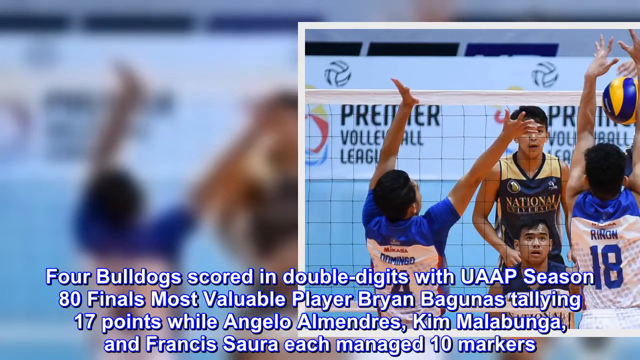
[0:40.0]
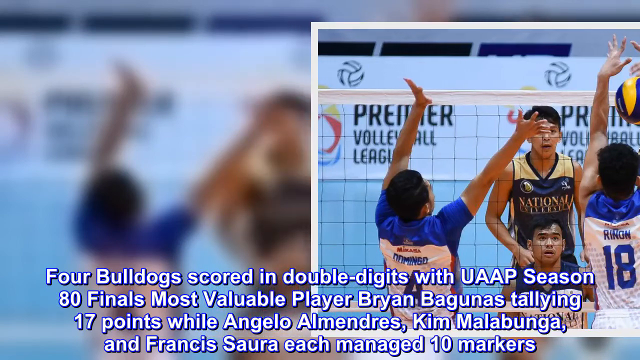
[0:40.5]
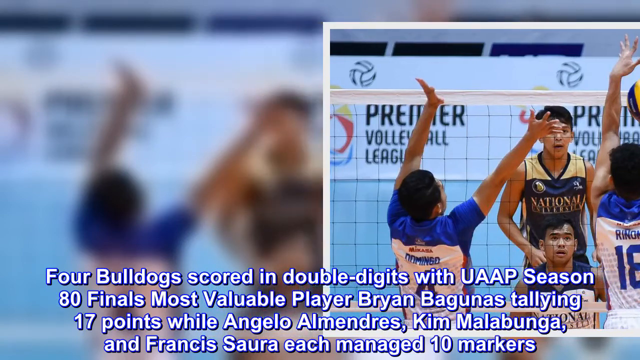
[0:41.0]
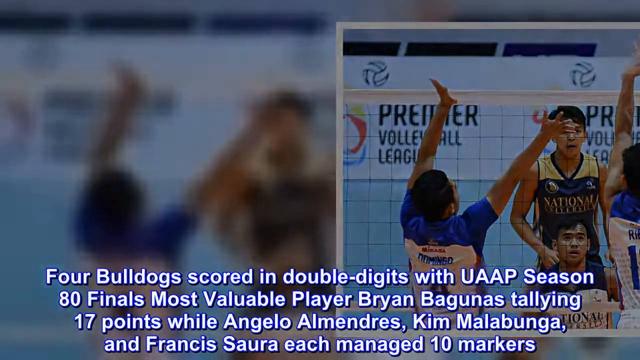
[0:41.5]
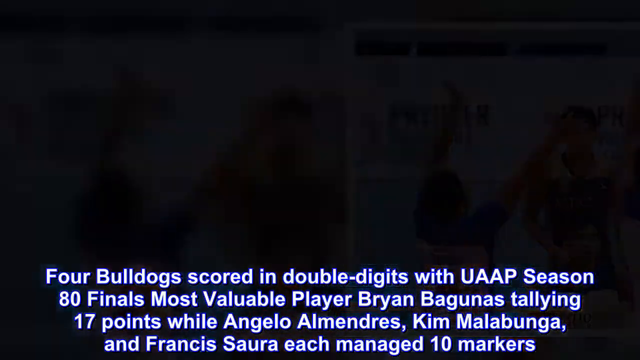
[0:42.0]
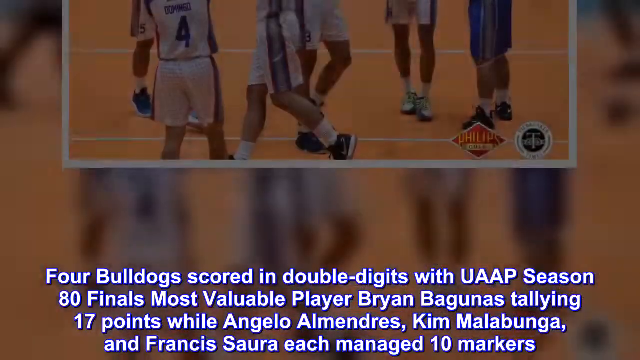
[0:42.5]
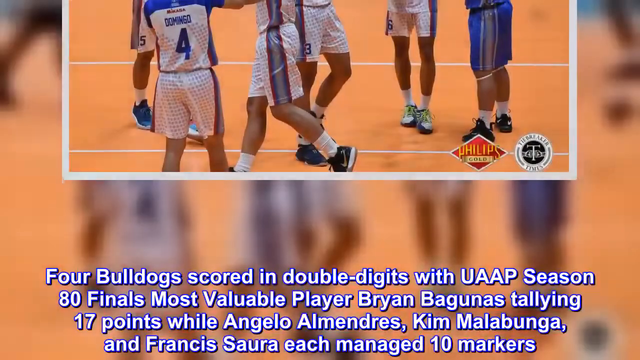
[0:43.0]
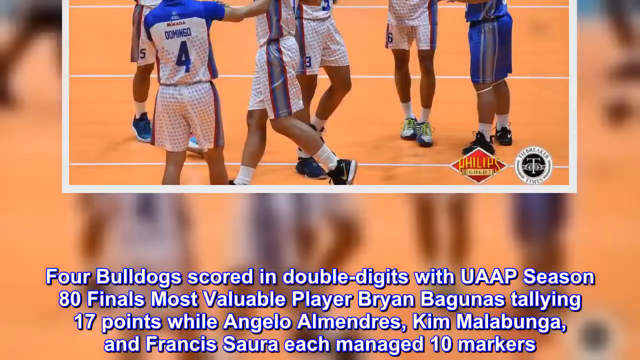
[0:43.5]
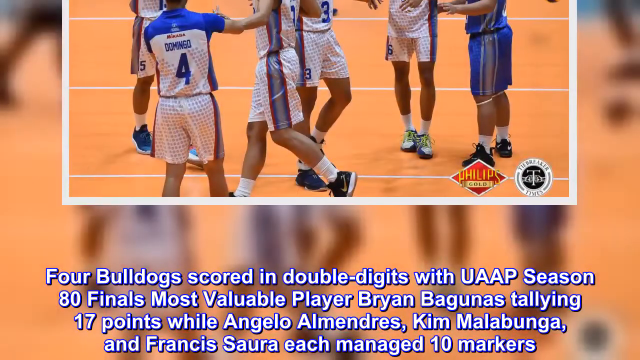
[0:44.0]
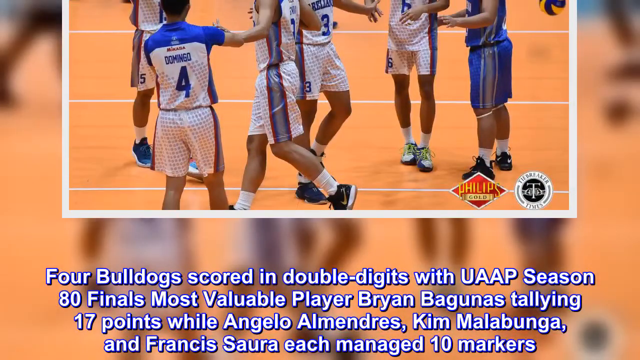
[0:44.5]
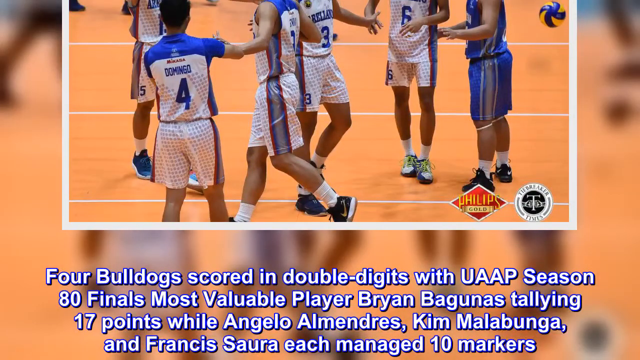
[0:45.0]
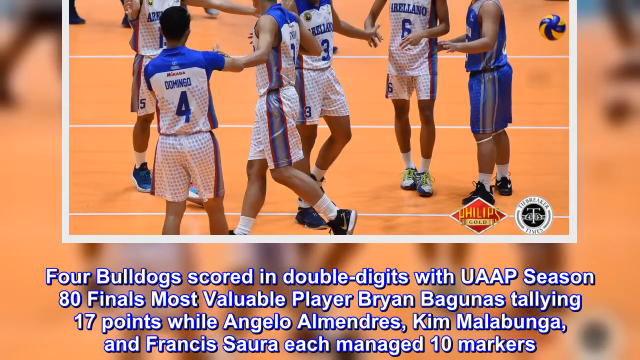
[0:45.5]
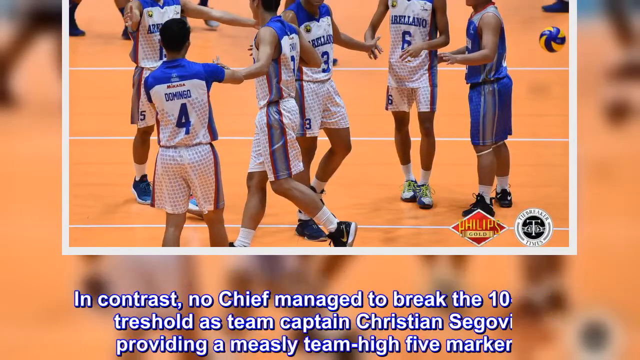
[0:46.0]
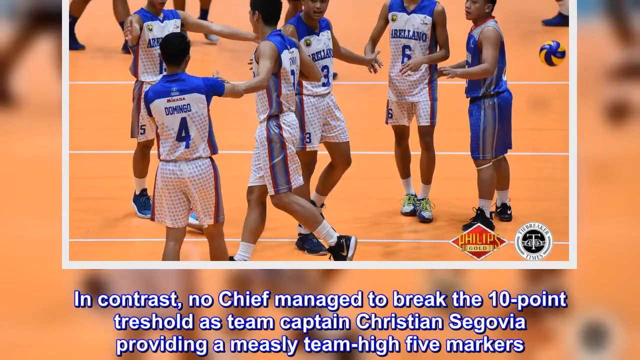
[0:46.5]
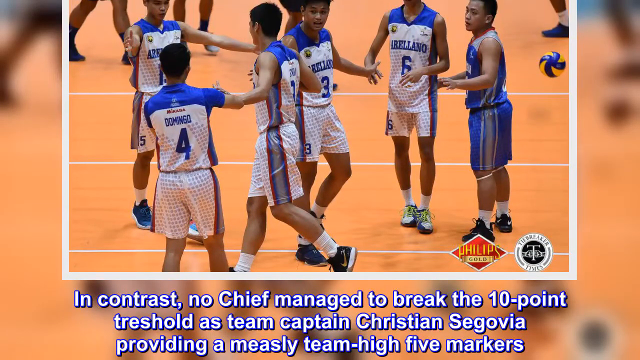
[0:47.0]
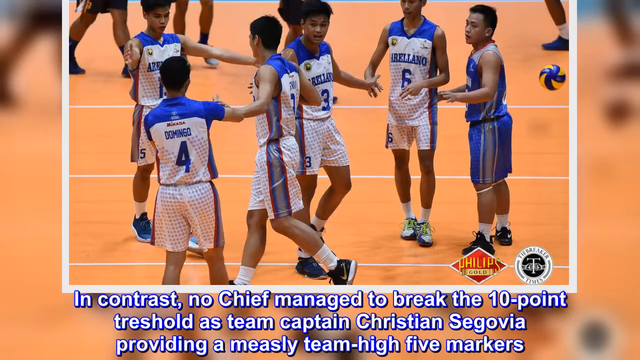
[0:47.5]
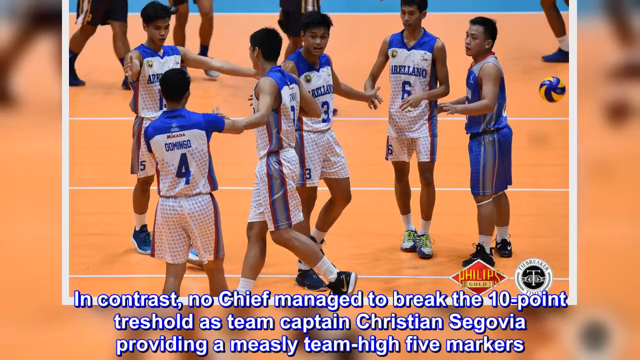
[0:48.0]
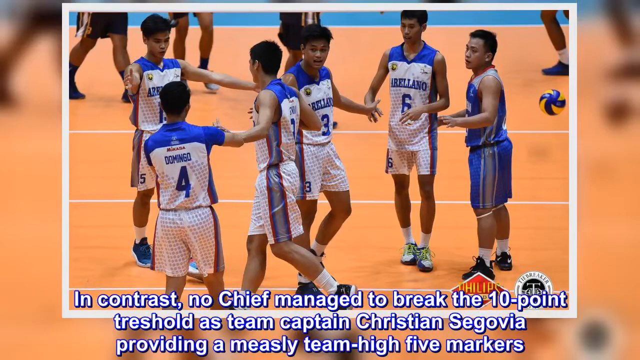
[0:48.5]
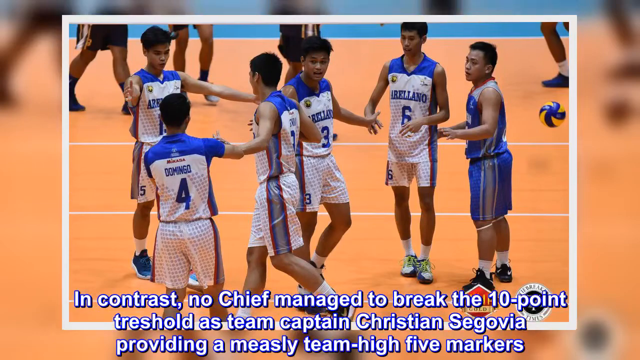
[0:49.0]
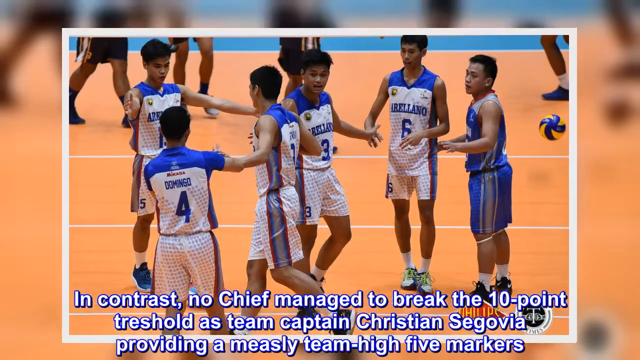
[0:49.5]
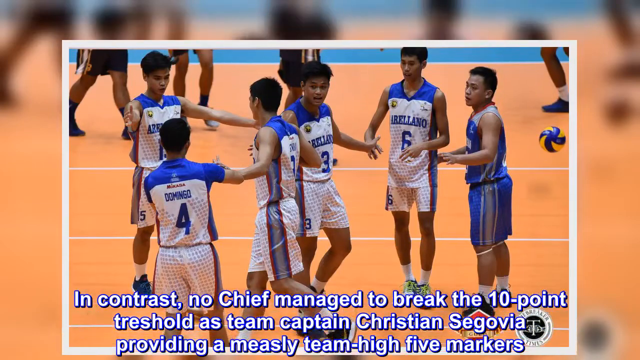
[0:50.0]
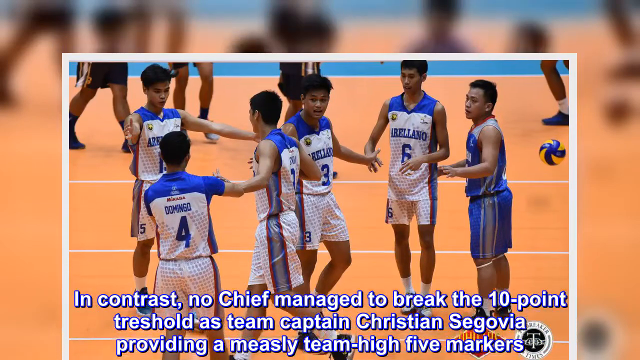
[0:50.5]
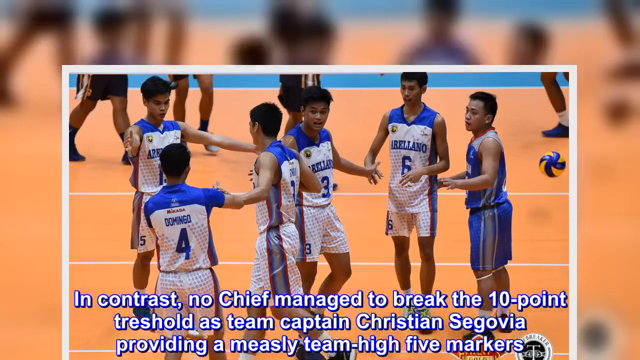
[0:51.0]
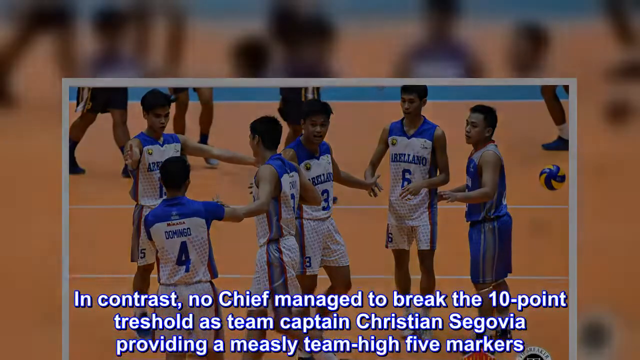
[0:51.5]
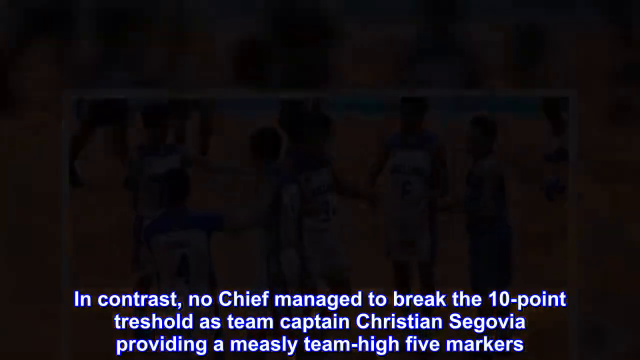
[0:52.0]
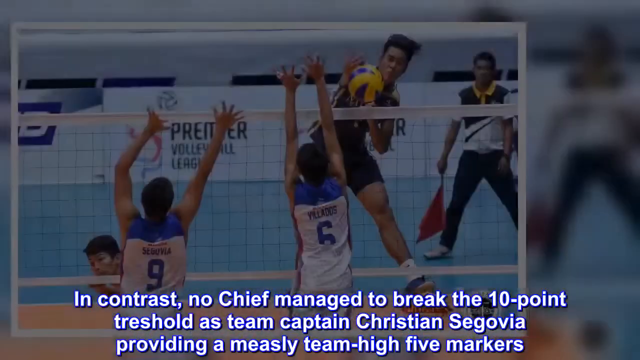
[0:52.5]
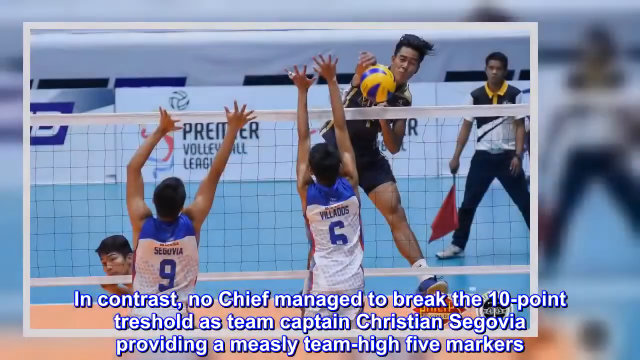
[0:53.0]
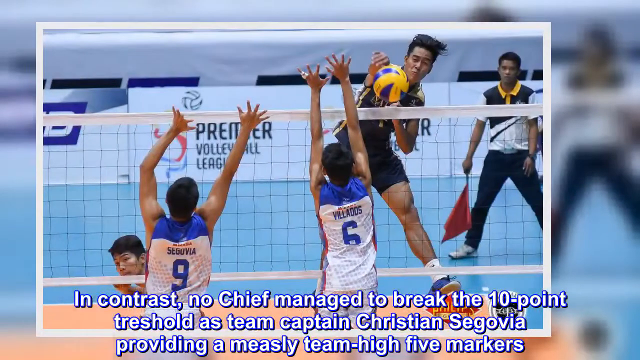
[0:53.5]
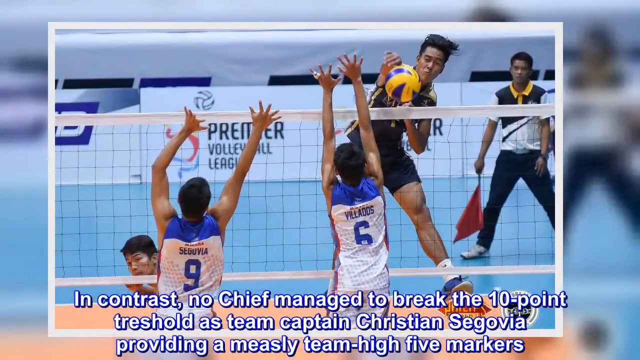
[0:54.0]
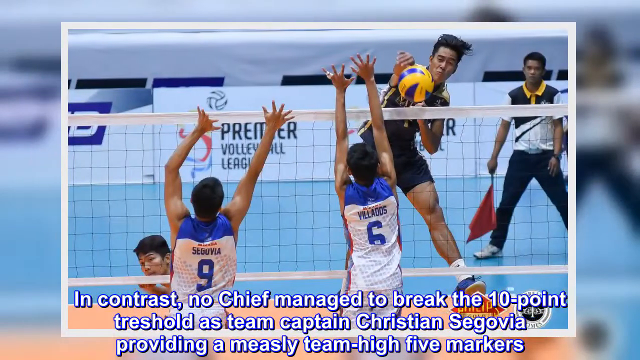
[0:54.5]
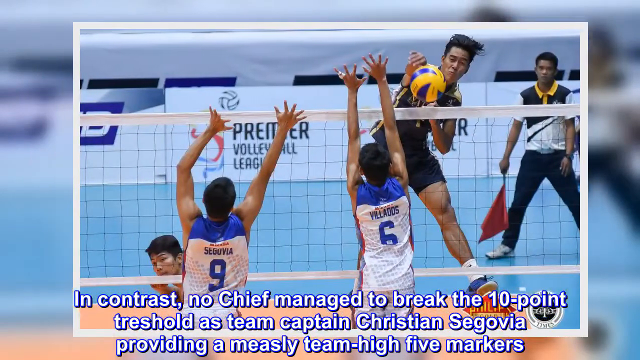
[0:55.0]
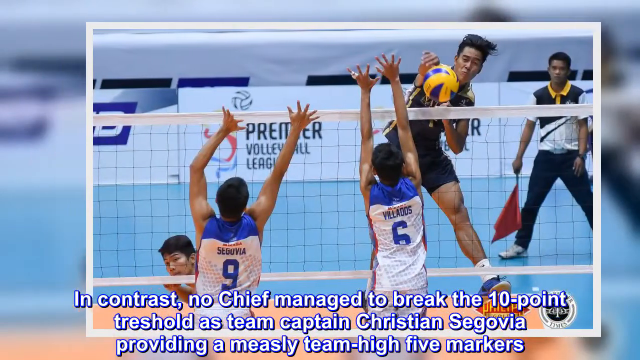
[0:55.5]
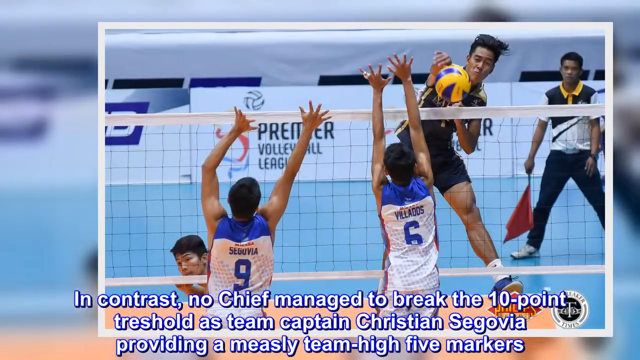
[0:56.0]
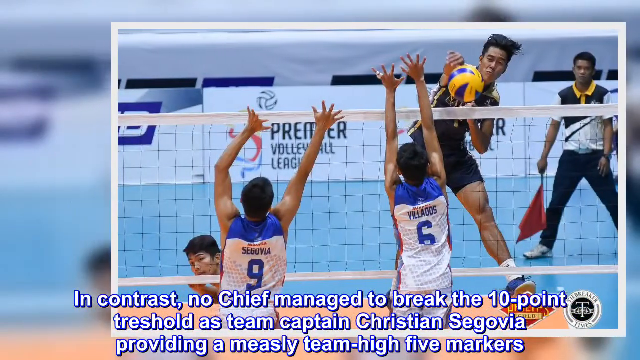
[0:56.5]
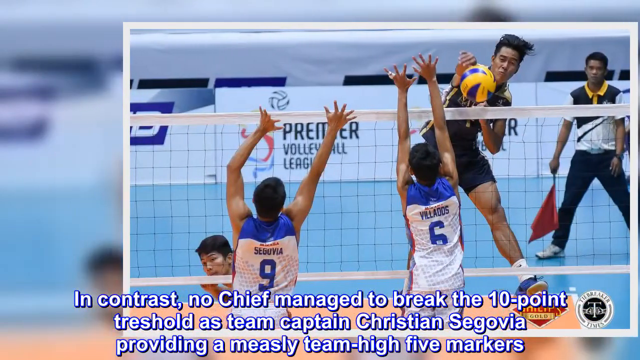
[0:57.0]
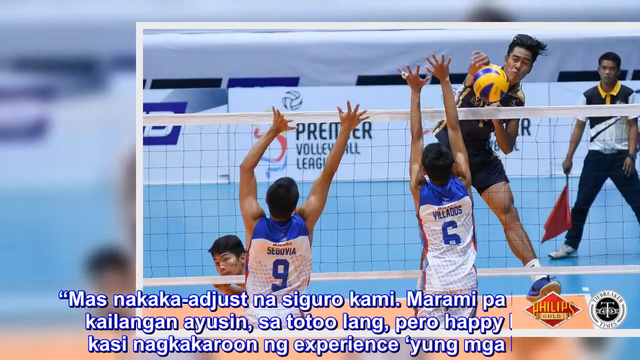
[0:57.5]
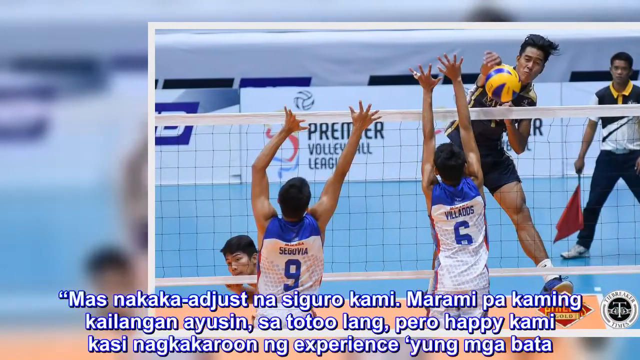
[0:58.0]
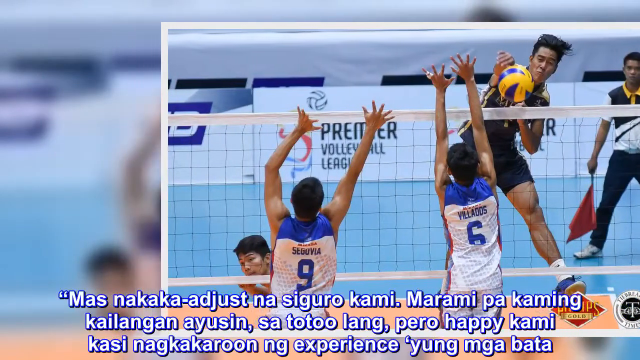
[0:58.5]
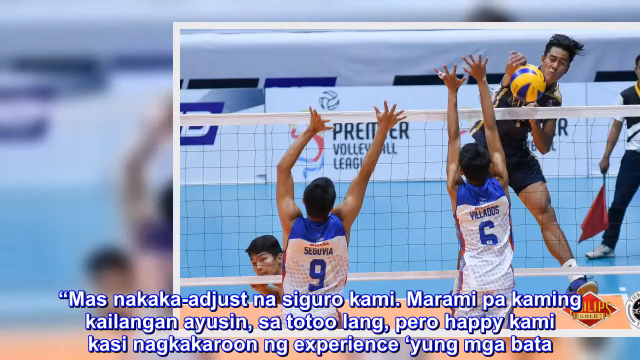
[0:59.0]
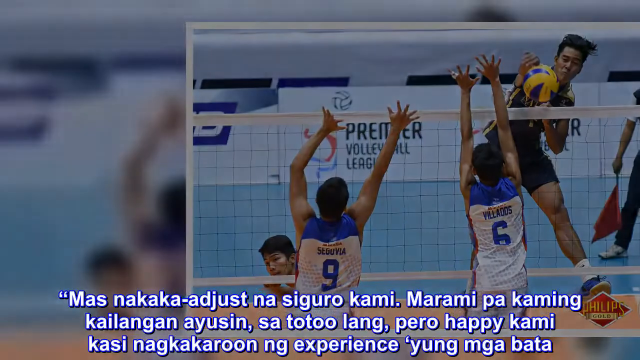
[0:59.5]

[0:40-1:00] The volleyball championship match between the National University Bulldogs and the Arellano University Chiefs continues. Text reads: "Four Bulldogs scored in double digits with UAAP Season 80 Finals Most Valuable Player Brian Baganas tallying 17 points while Angelo Almadrez, Kim Maligabuna, and Francis Sarra each managed 10 markers."